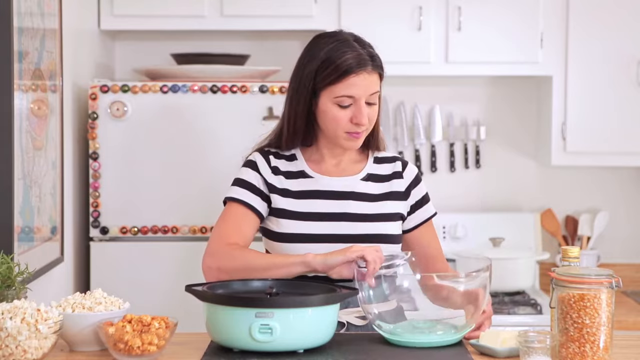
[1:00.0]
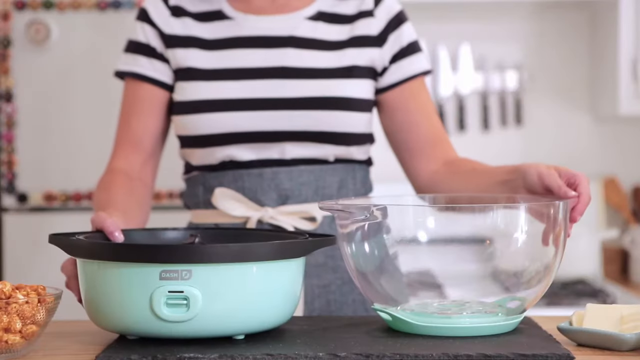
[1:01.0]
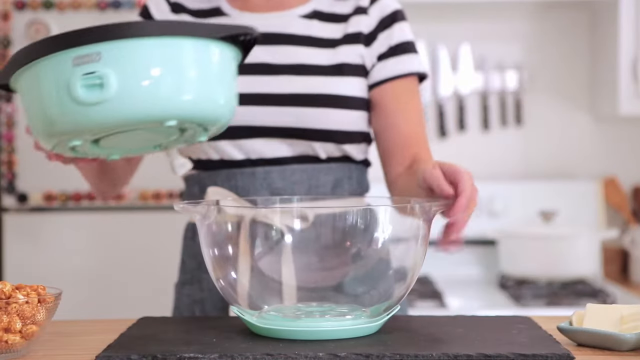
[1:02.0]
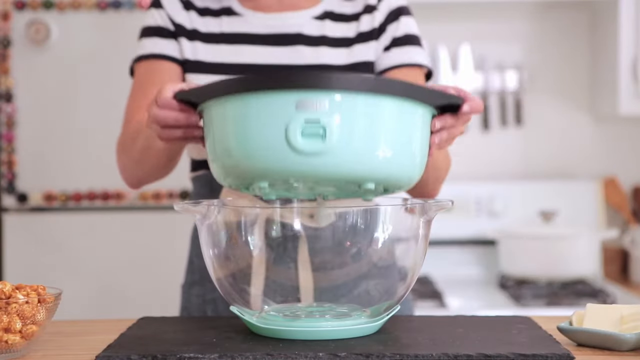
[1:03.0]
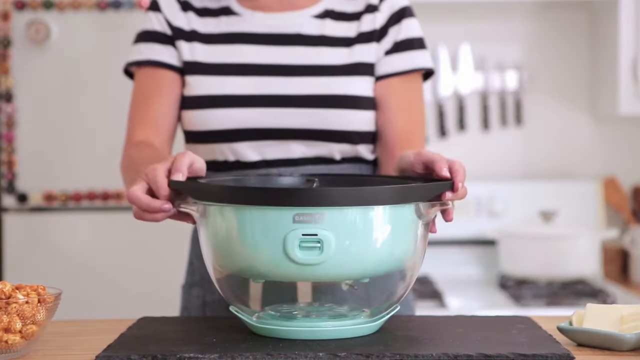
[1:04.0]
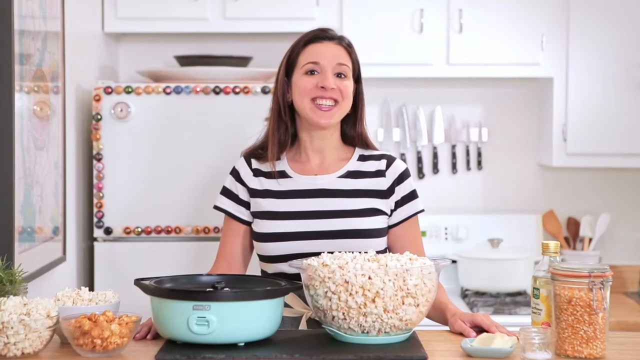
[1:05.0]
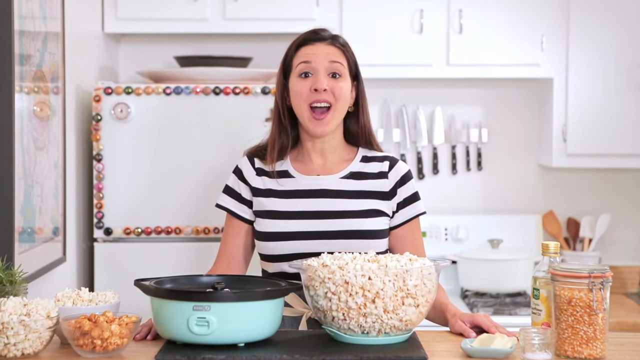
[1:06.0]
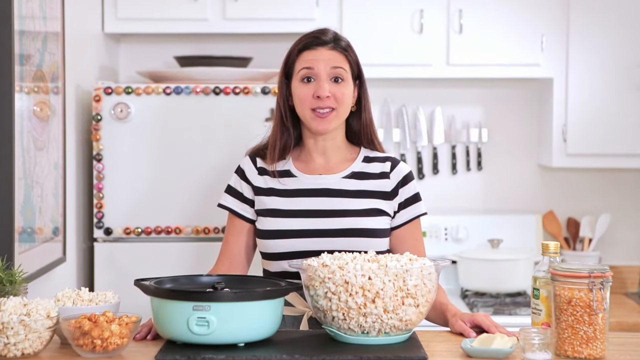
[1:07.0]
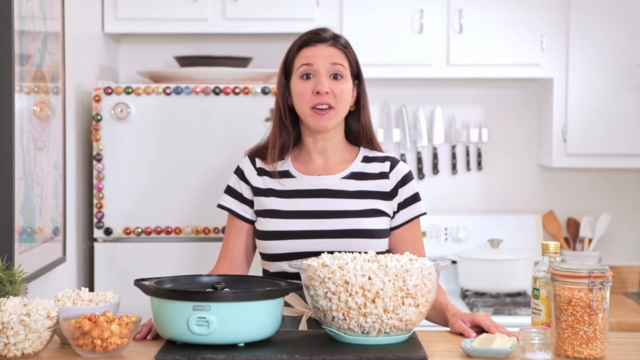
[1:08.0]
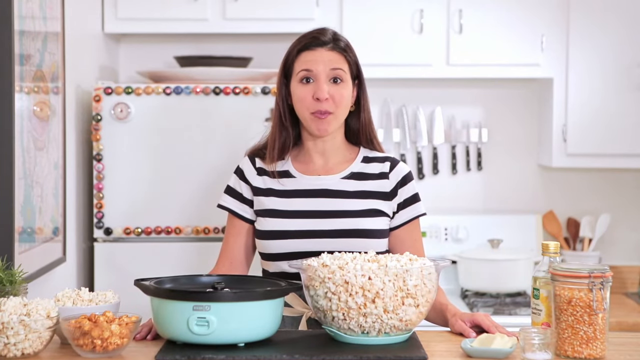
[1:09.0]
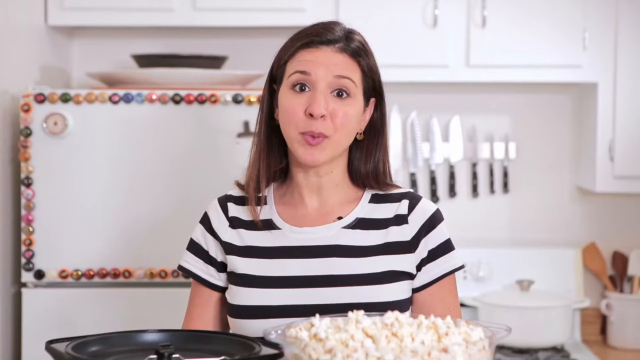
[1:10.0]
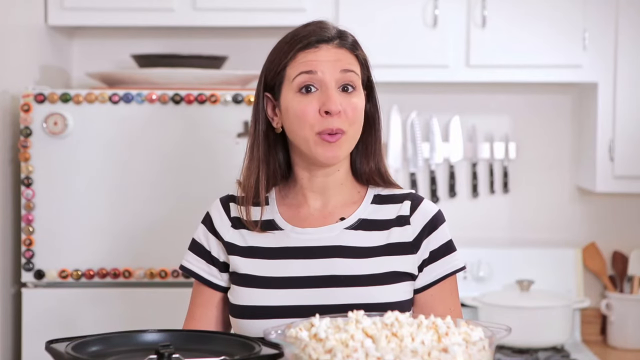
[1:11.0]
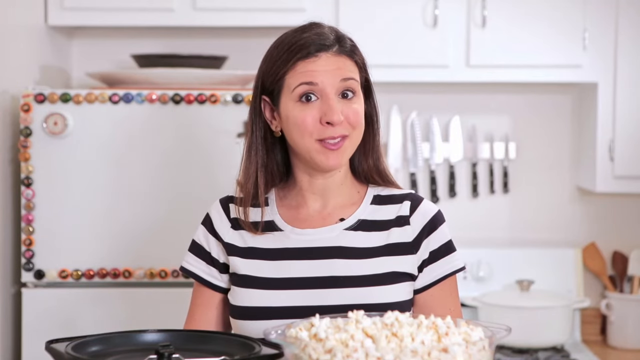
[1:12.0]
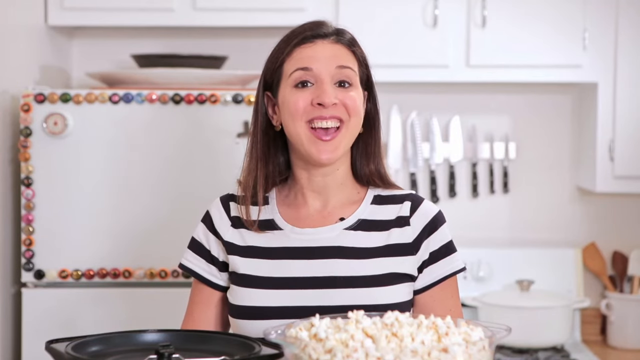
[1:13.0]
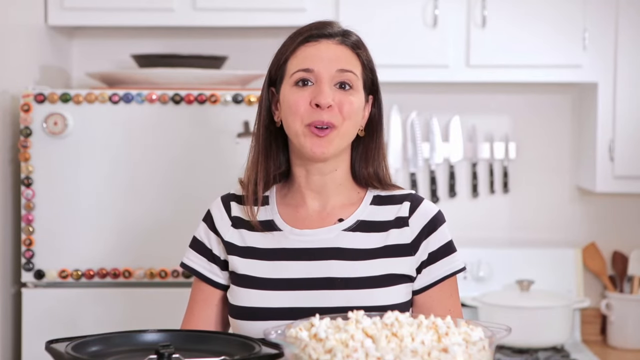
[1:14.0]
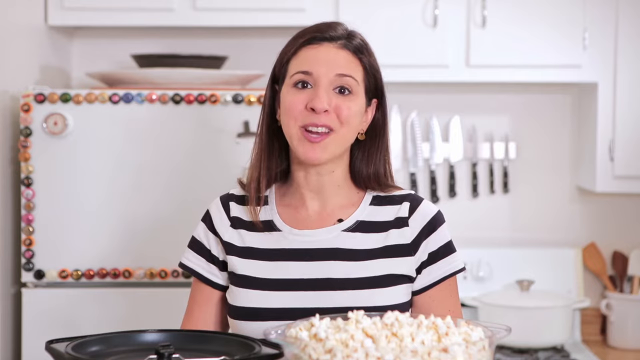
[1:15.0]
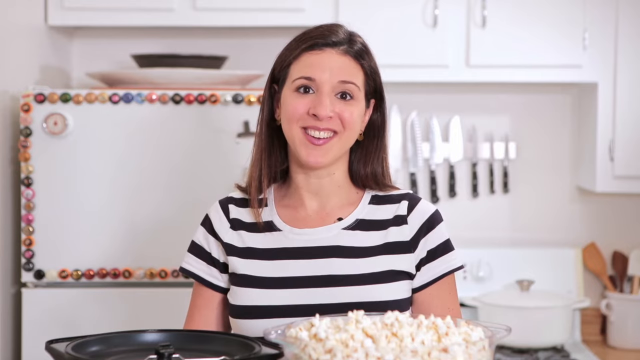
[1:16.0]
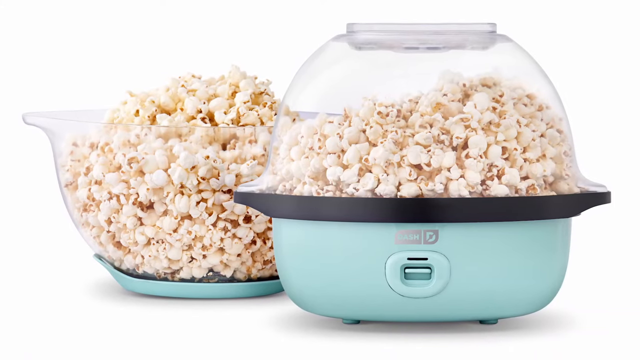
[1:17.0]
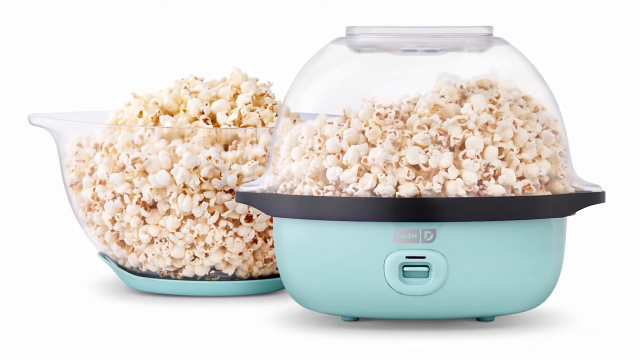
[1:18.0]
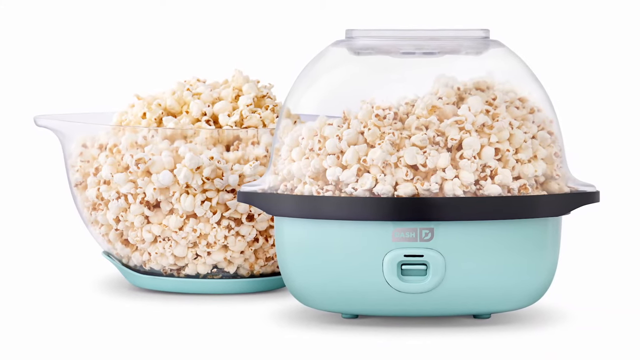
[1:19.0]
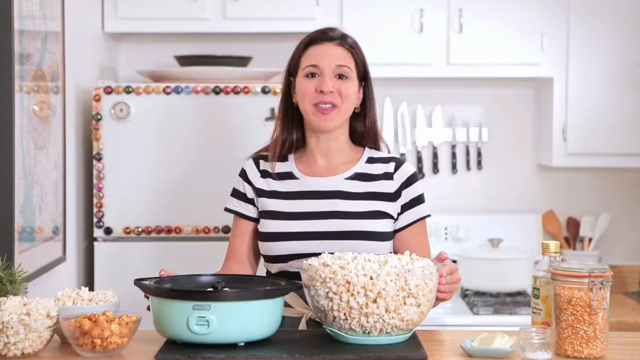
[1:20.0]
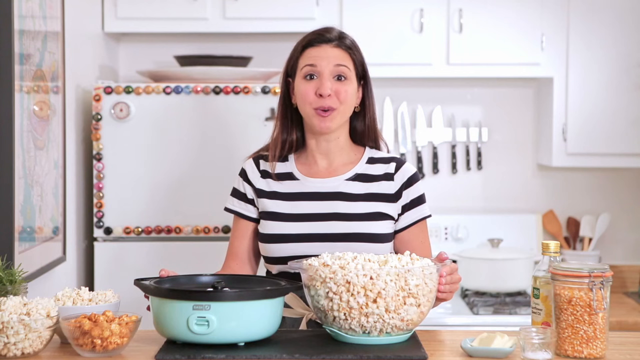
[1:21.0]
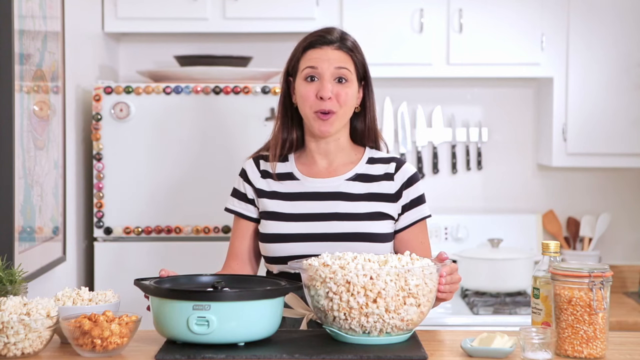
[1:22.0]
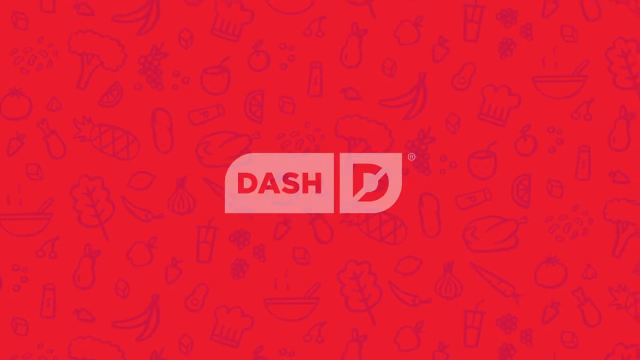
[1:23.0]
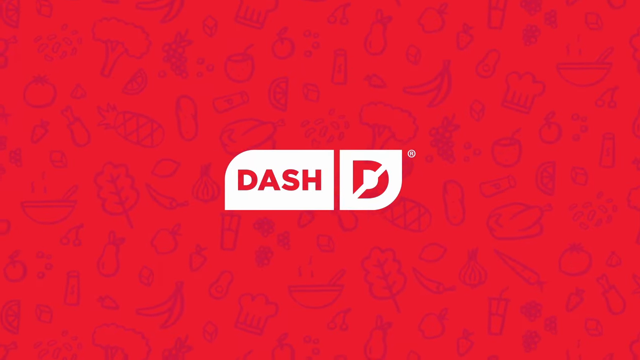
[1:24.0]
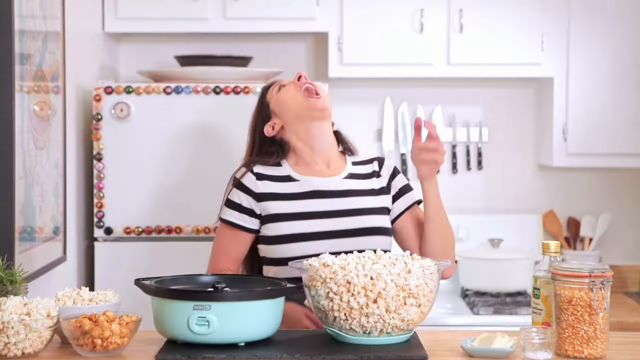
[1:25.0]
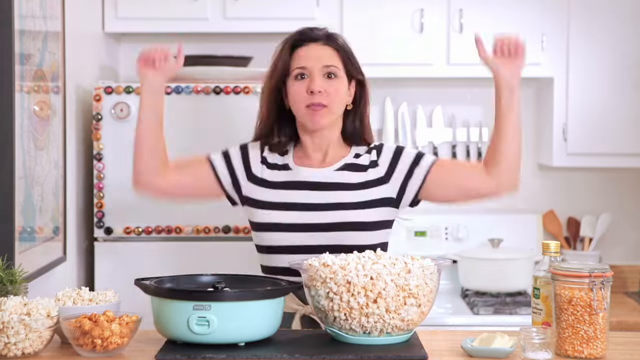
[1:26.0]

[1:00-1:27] The video shows how to clean the popcorn maker and how to store it so it does not get damaged; the woman apparently shows how to keep it in a safe place.